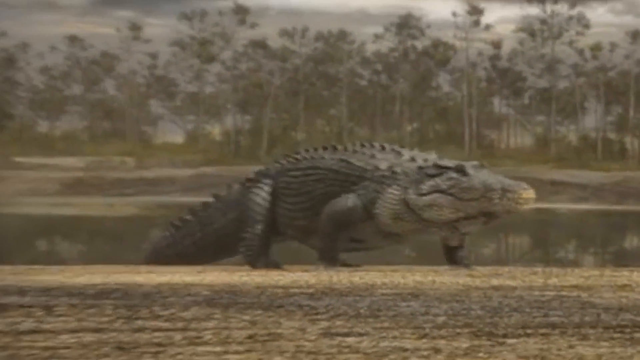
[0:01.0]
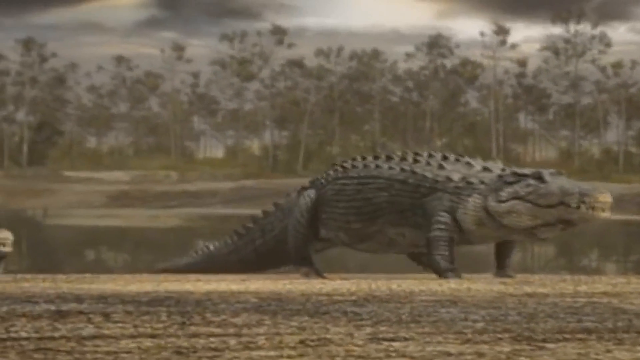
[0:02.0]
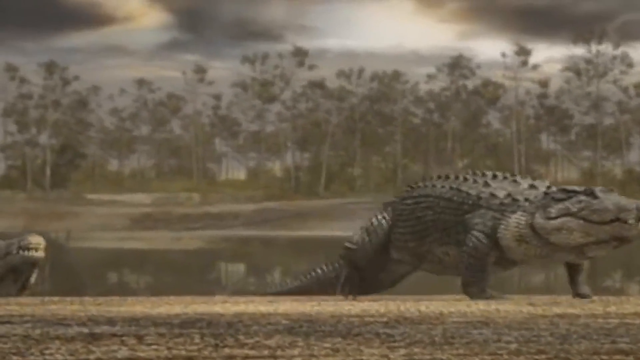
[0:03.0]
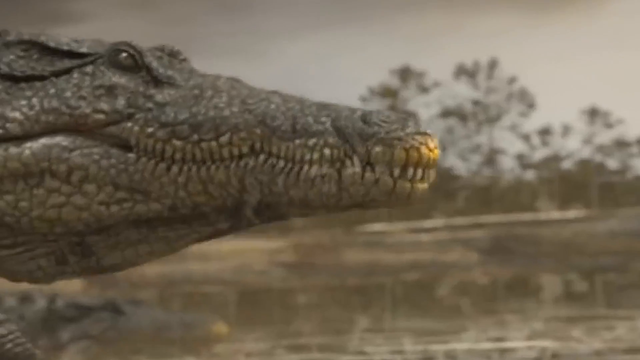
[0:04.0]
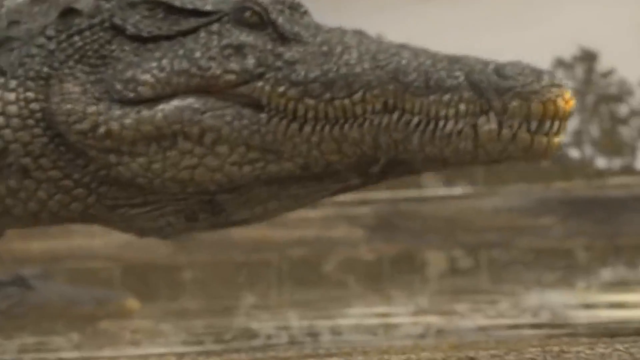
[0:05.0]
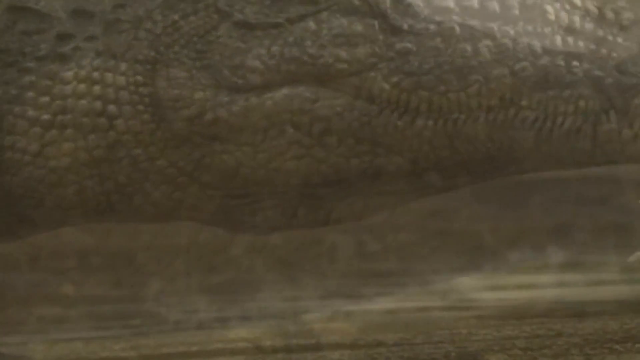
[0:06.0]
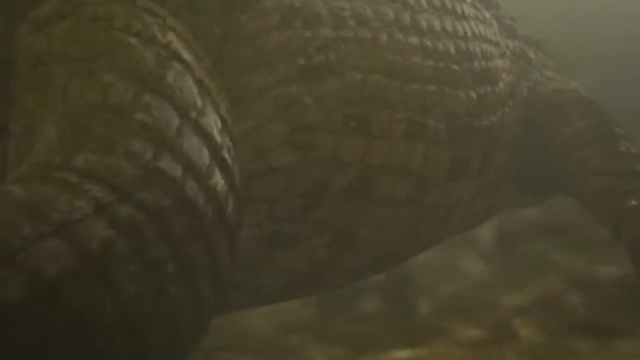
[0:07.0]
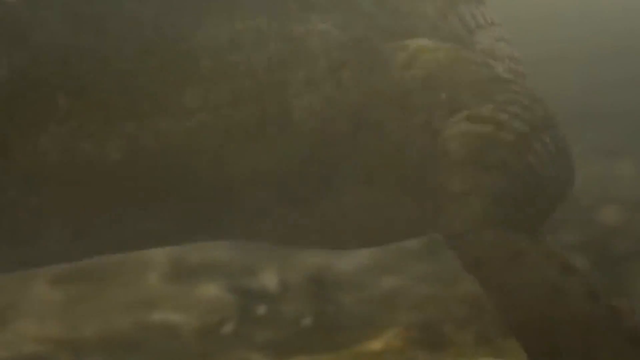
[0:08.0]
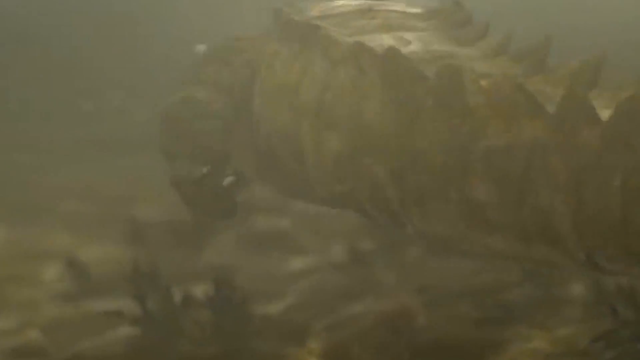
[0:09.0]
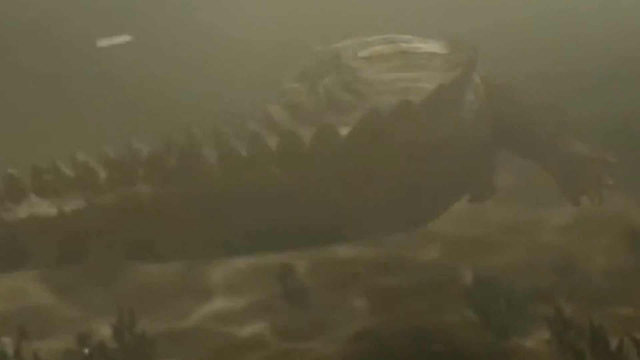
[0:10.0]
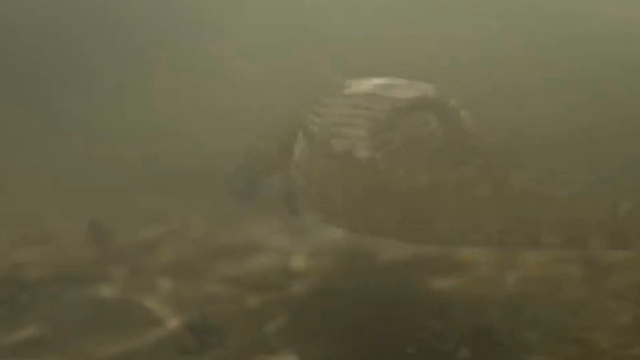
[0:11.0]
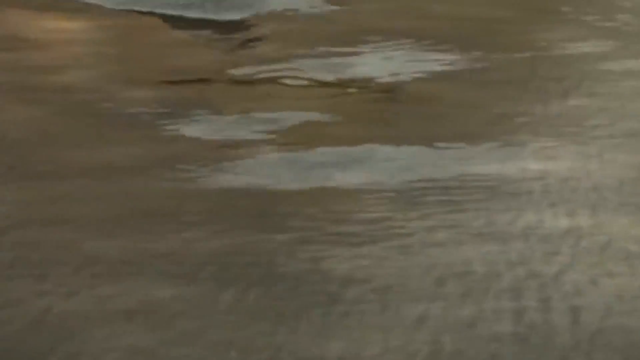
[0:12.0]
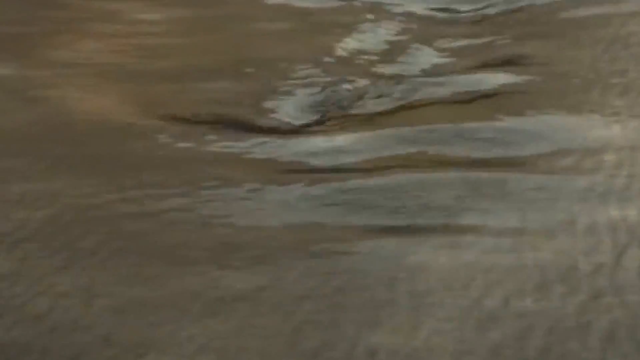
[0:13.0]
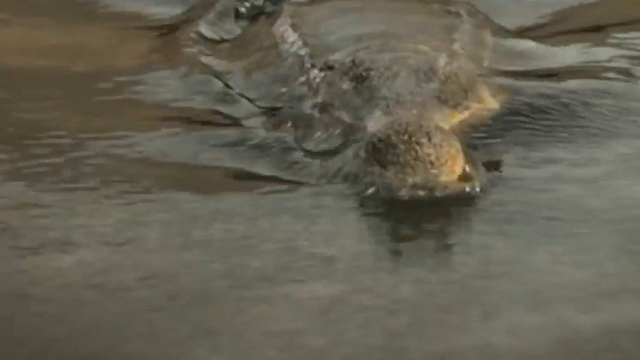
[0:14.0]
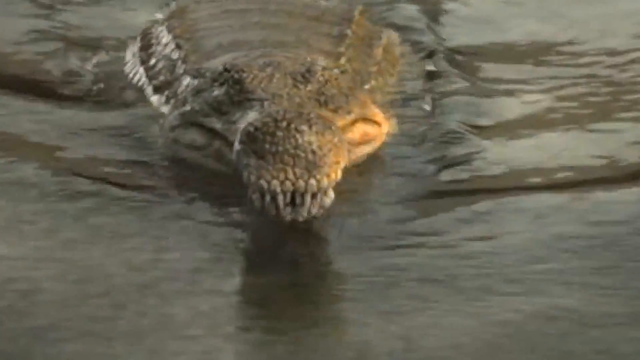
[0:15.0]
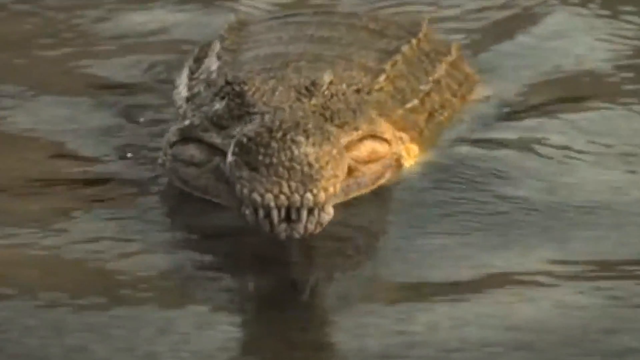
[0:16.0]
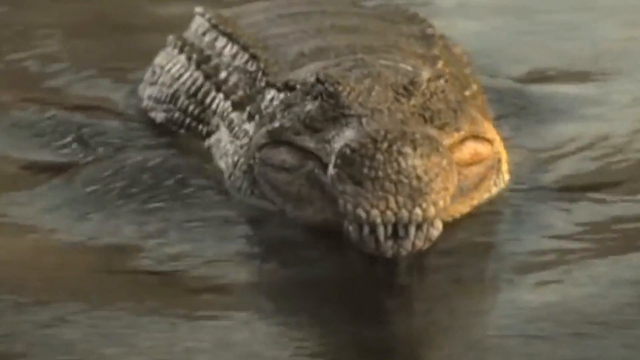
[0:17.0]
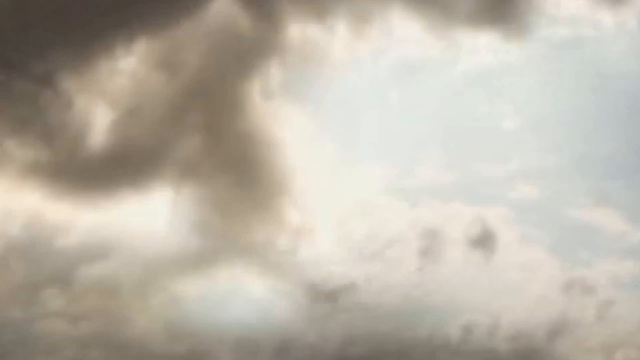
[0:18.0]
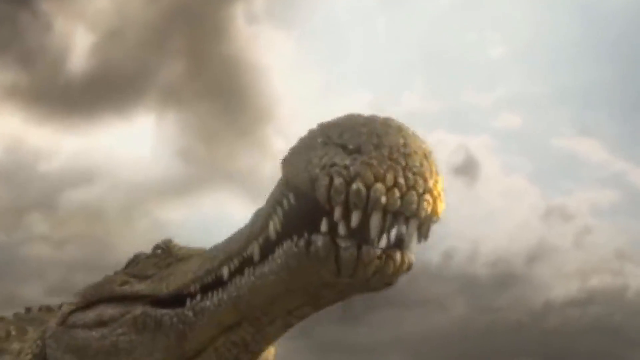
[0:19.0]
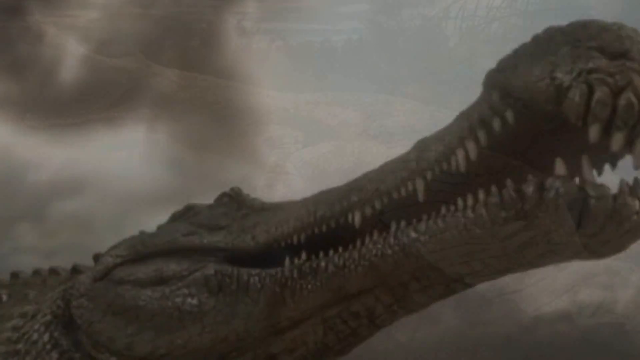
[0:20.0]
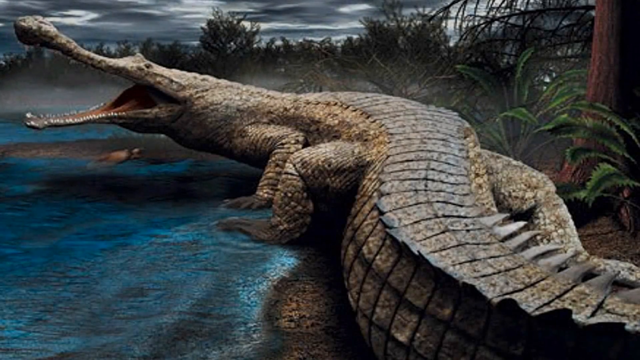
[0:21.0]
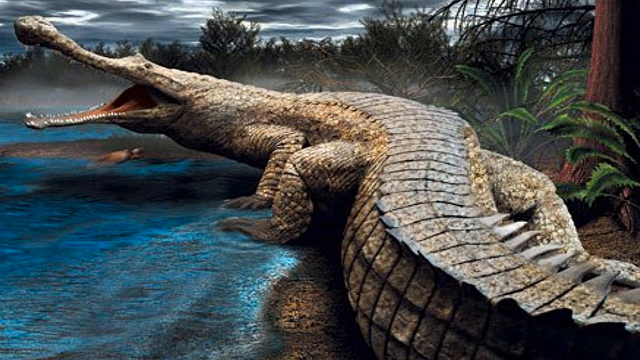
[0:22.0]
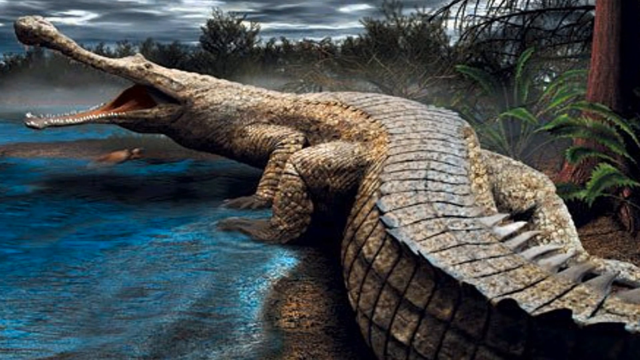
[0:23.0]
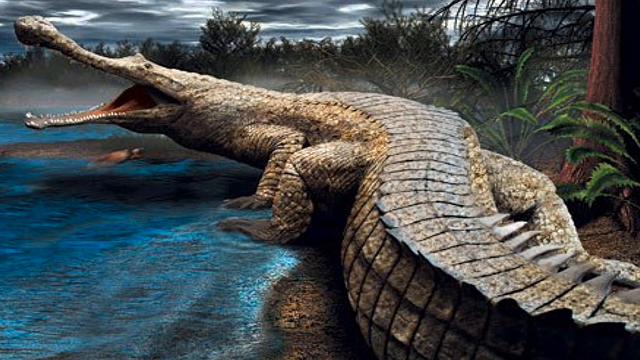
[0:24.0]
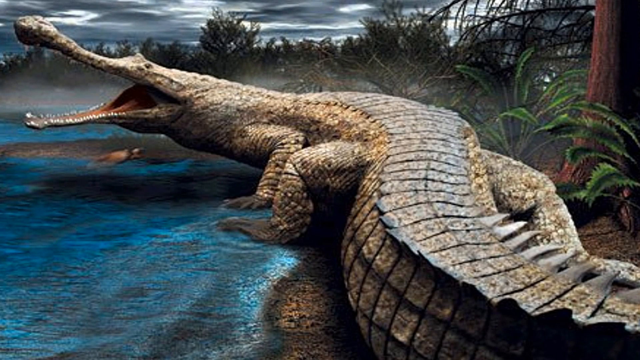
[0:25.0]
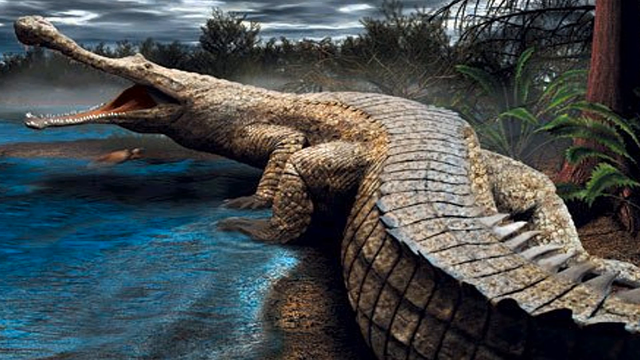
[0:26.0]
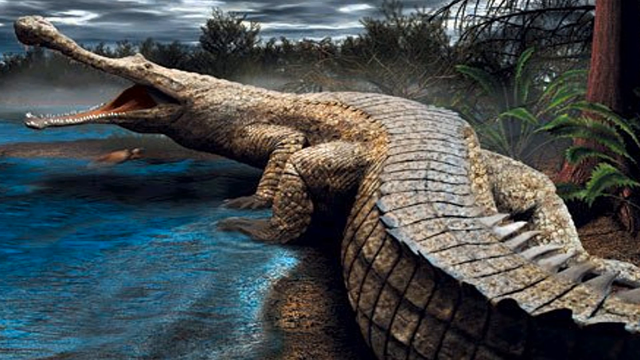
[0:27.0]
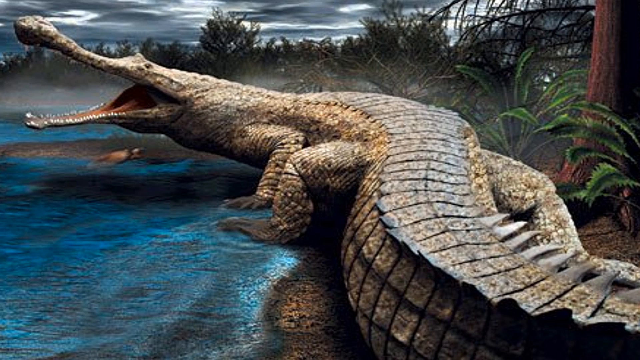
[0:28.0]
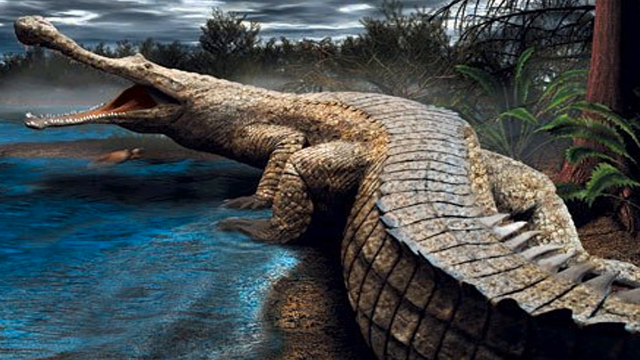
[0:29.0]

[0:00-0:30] The video is about crocodiles. It opens with a crocodile walking that does not look very convincing; there appears to be a disconnect between the crocodile and the background behind it. The scene then moves underwater, where the crocodile pushes off from the bottom and begins swimming, which looks very real. Next, only the motion of the water is visible before the crocodile breaches the surface. The transition looks somewhat odd: given the crocodile's size and the position of the things on its back, some of them would have been above the surface before it broke the water. A close-up of a crocodile's head follows, with an elongated snout that is much too narrow and looks more like a cartoon snout. The video then shows a brightly colored still image of a crocodile with the same snout.